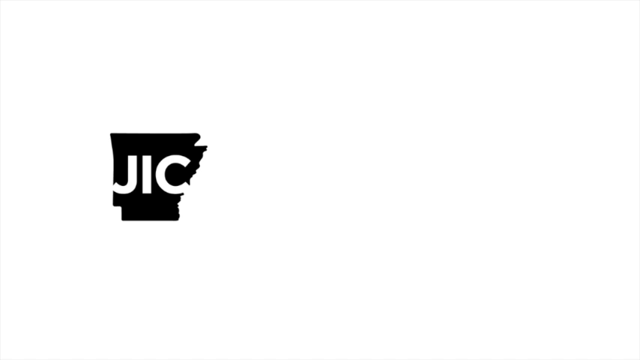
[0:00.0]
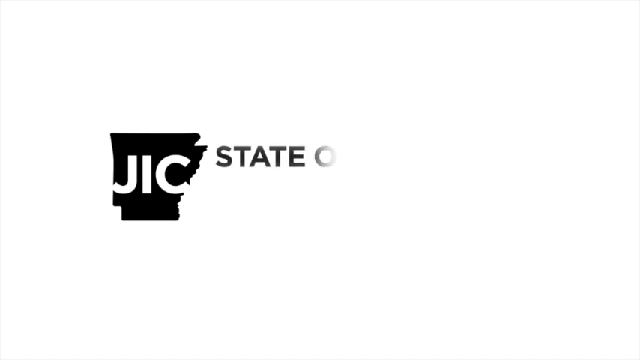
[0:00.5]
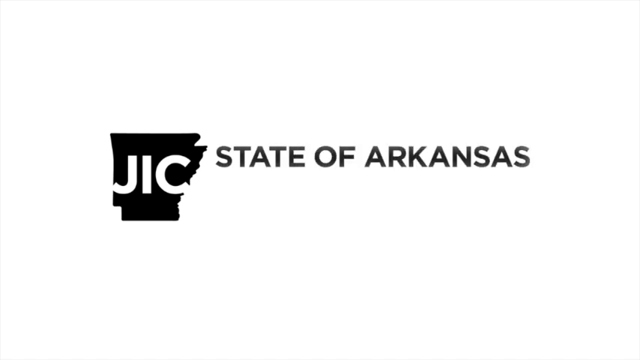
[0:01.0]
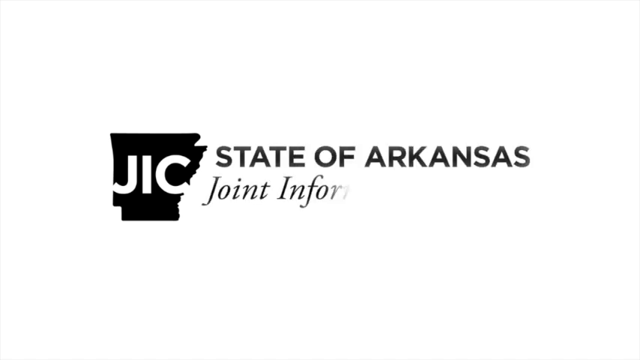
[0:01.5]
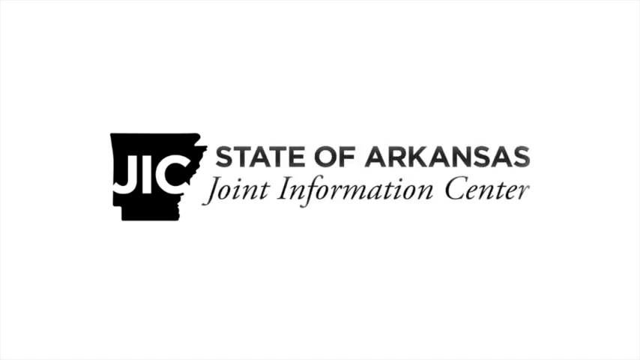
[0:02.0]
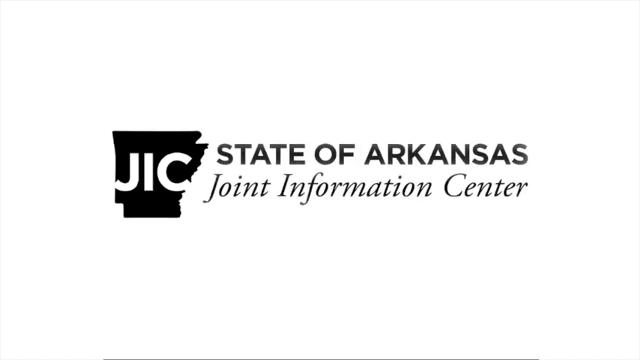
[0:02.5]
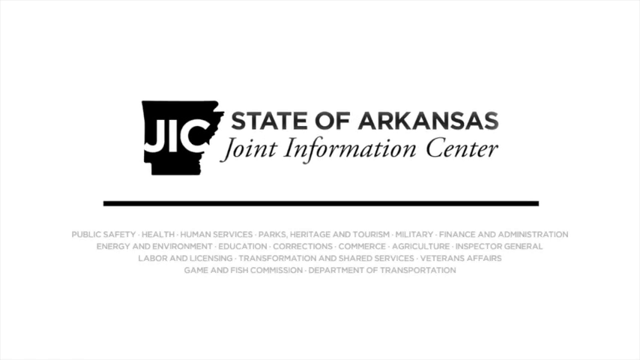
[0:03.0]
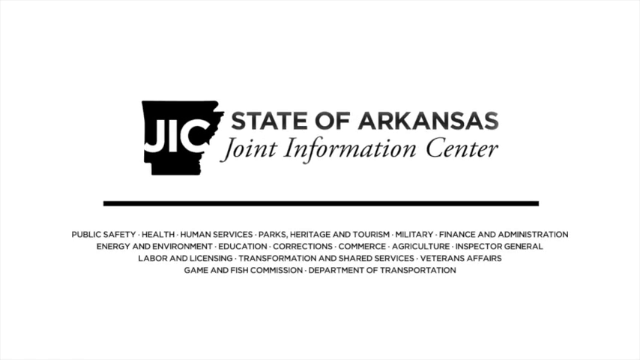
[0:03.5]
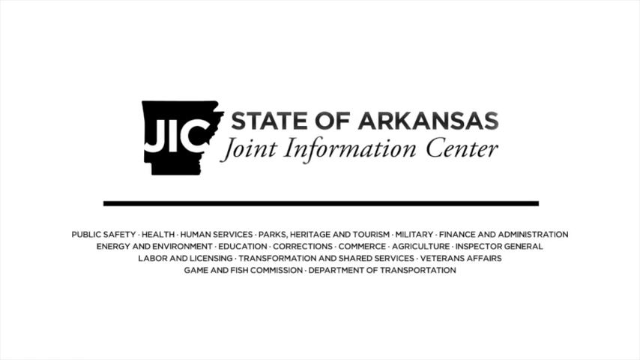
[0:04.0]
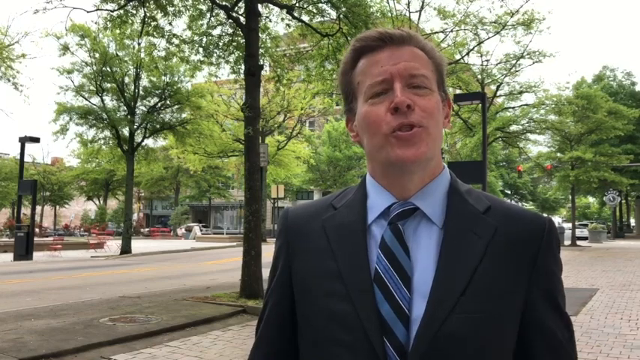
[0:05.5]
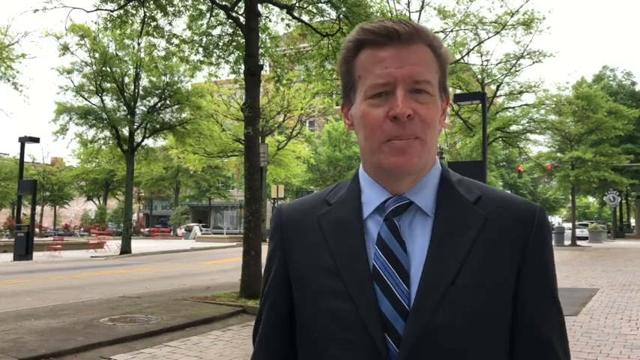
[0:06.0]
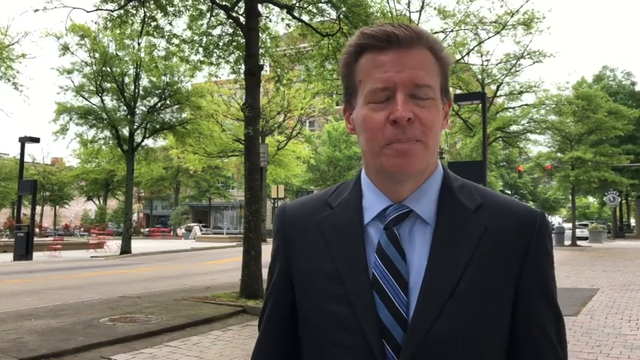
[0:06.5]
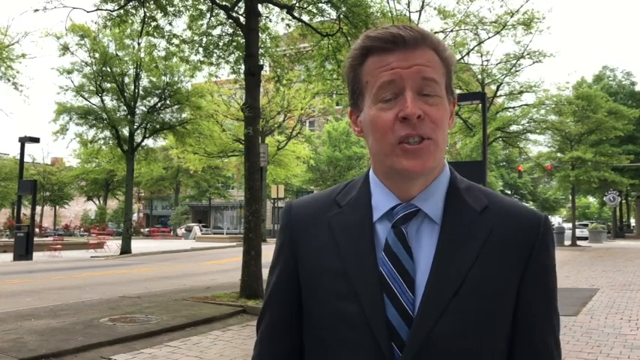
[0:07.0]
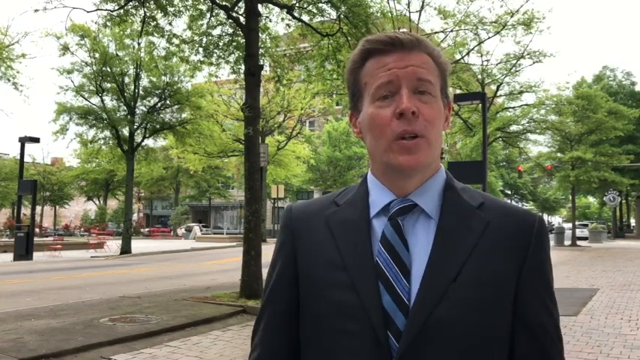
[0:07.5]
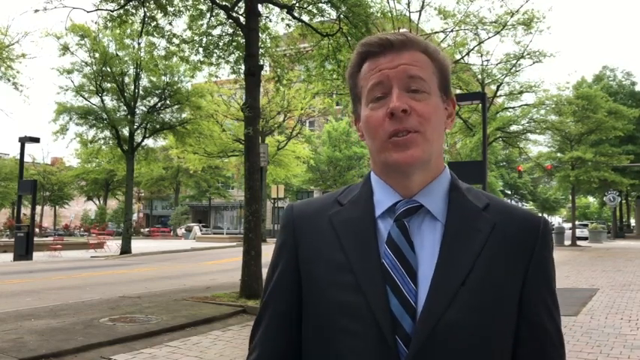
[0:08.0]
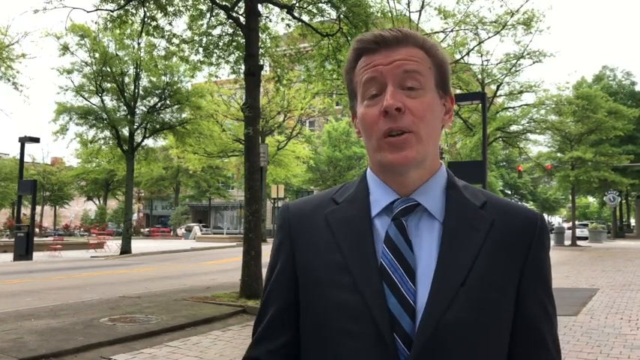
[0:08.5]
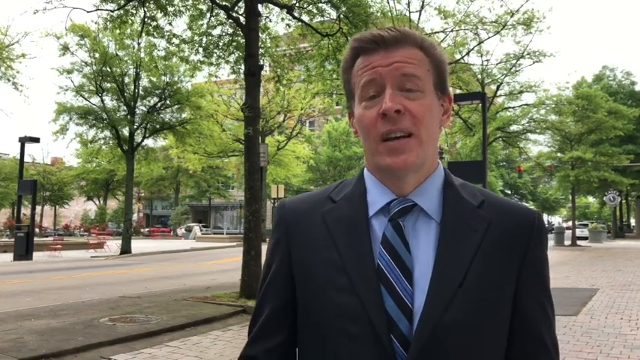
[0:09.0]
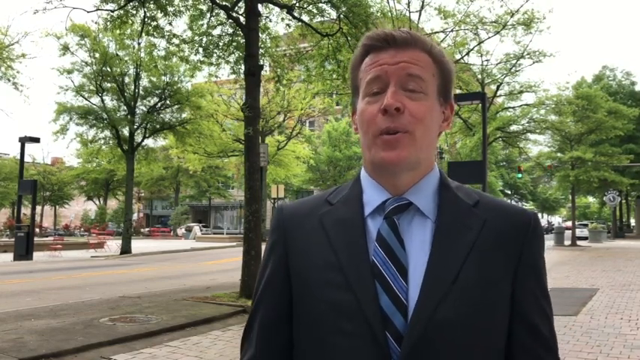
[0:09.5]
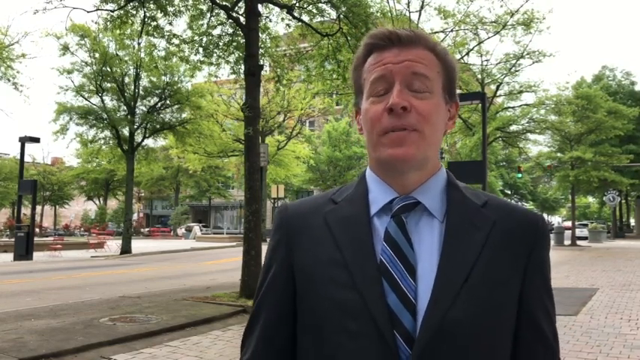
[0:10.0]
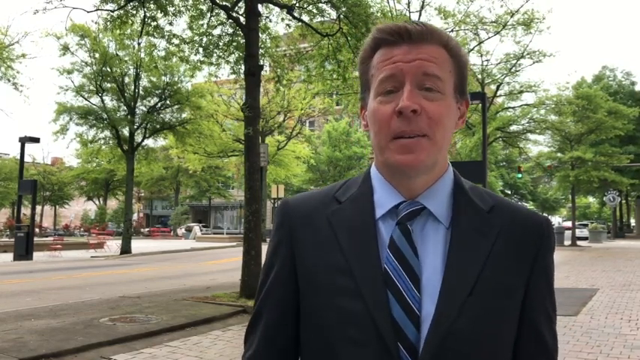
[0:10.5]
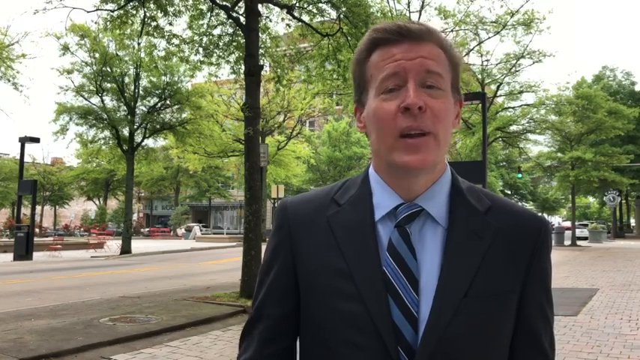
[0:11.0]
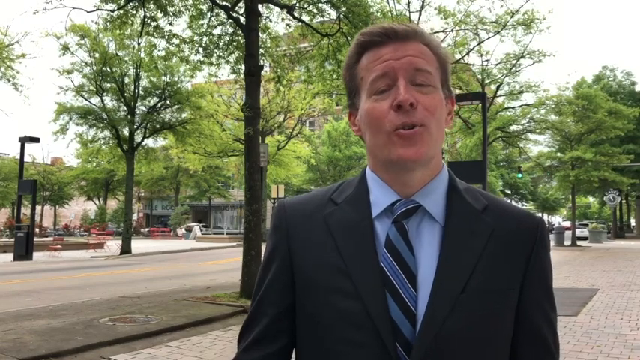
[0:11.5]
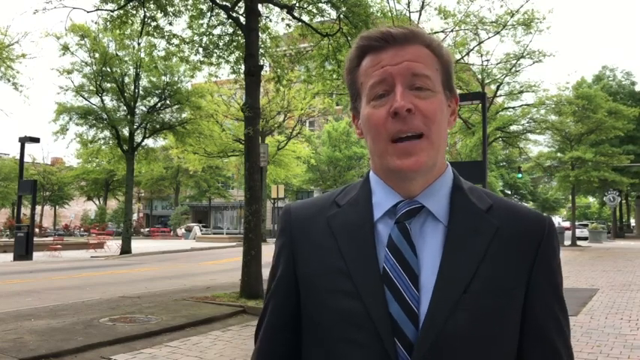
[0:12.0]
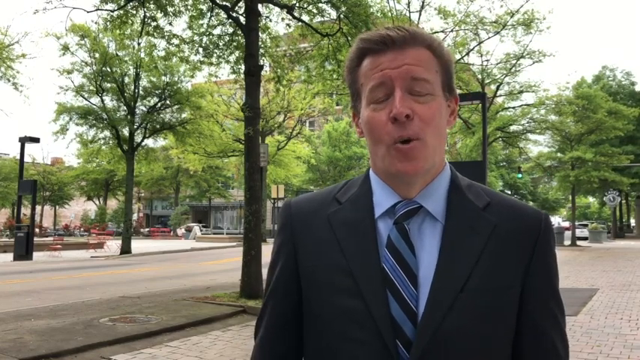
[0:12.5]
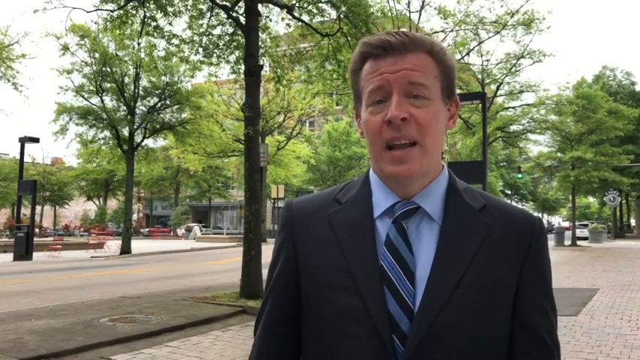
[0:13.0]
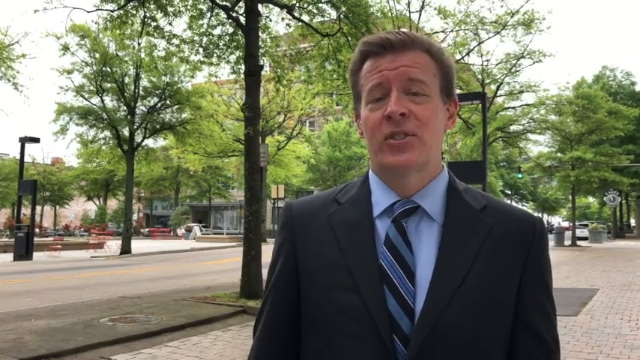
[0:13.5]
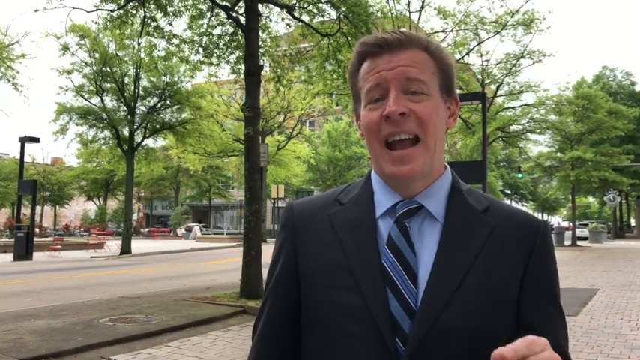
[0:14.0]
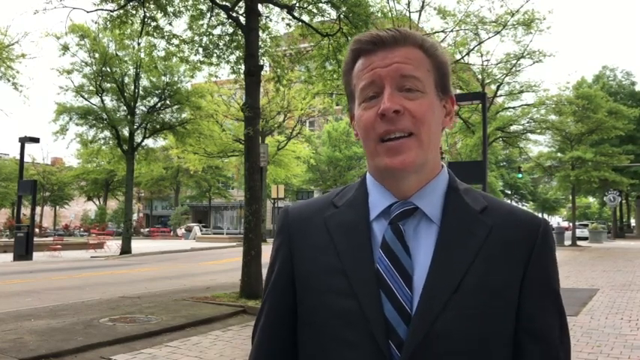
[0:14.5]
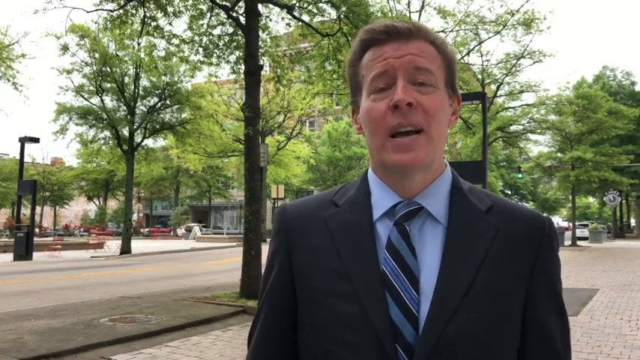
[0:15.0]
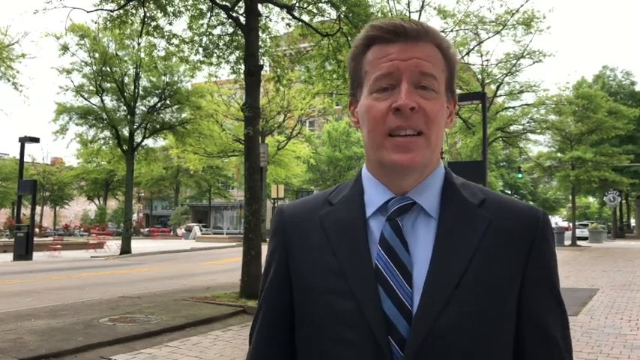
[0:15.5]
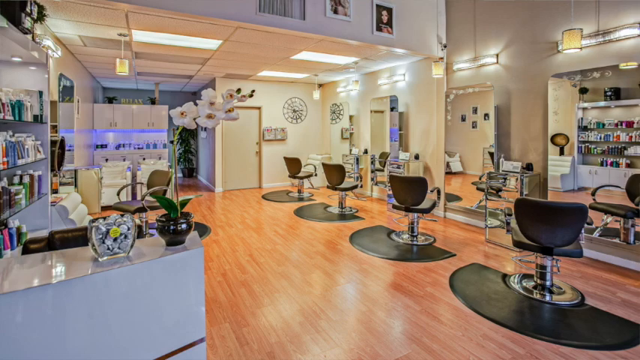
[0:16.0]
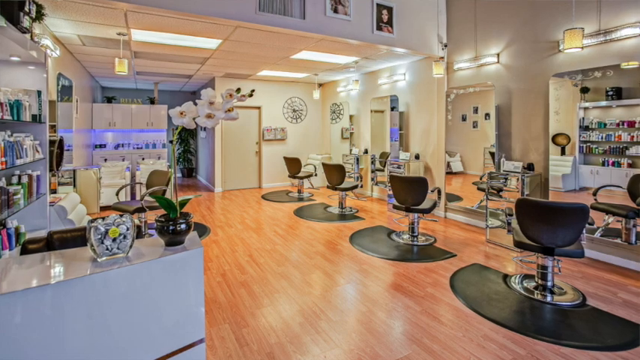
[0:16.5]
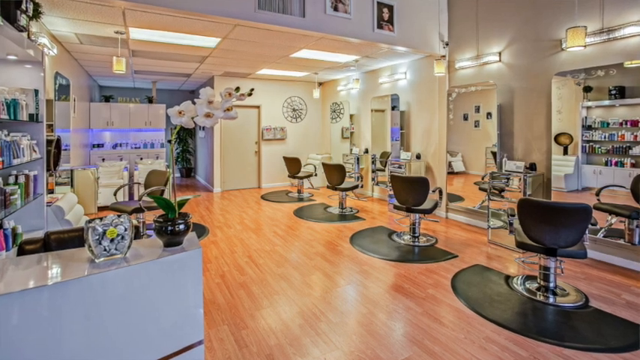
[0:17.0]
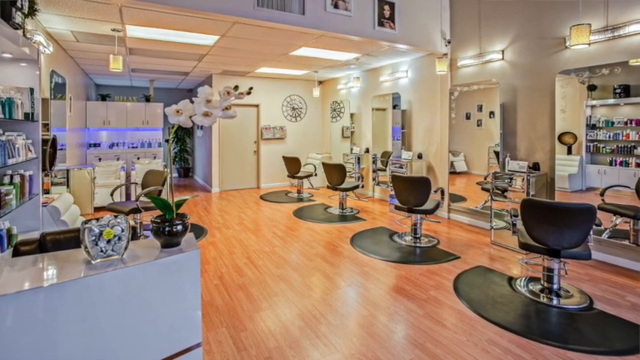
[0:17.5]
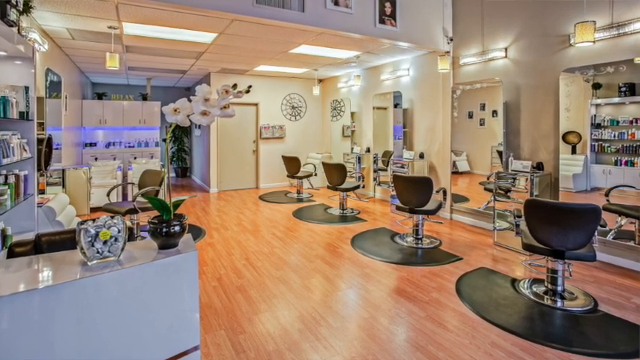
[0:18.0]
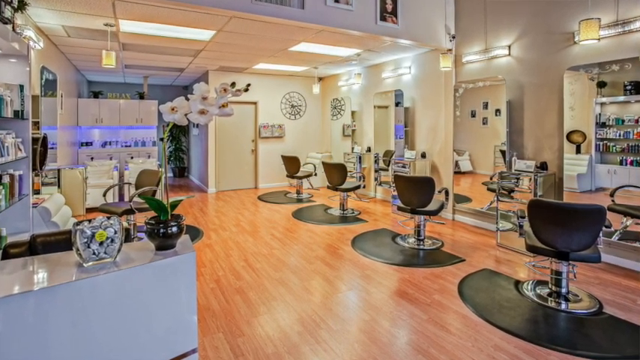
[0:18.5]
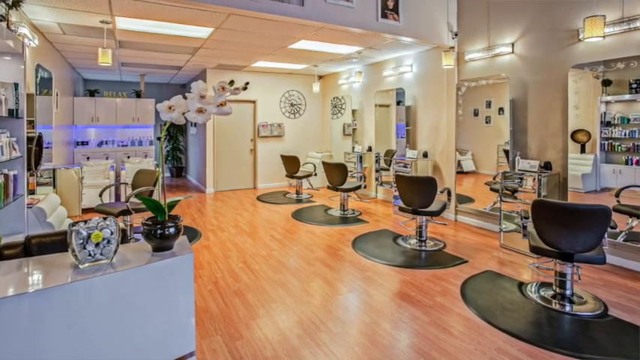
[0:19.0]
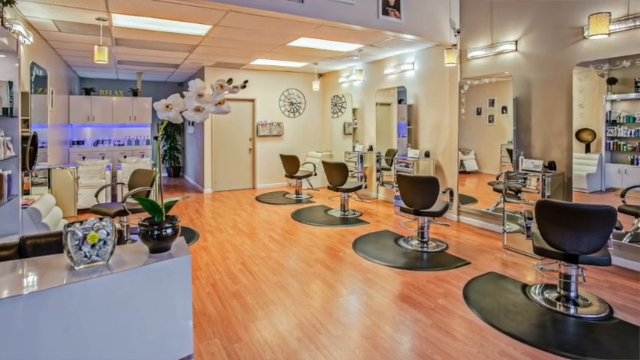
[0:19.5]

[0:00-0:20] The video opens on a State of Arkansas Joint Information Center slide with a white background and a black map of Arkansas bearing "JIC", which stands for Joint Information Center. Below the logo are words for public safety, health, human services, parks, heritage and tourism, military, finance and administration, and the other departments of the State of Arkansas. It cuts to a street interview with a white man in his 40s wearing a suit and a striped tie, a field reporter standing on a paved sidewalk along an empty street. The sidewalks are tree-lined, and there is a plaza across from where he is standing. The scene then cuts to the interior of a hair salon with four barber seats, a small waiting area and a receptionist table. Many products are on glass shelves on either side of the wall.